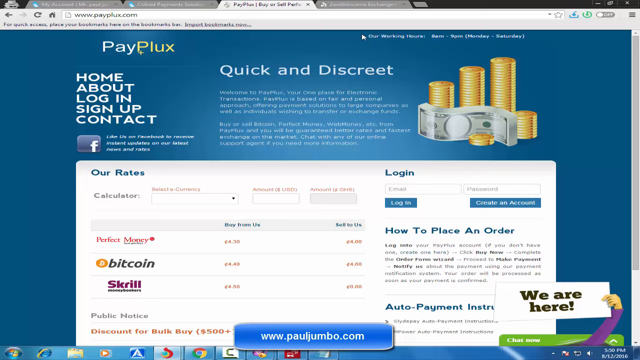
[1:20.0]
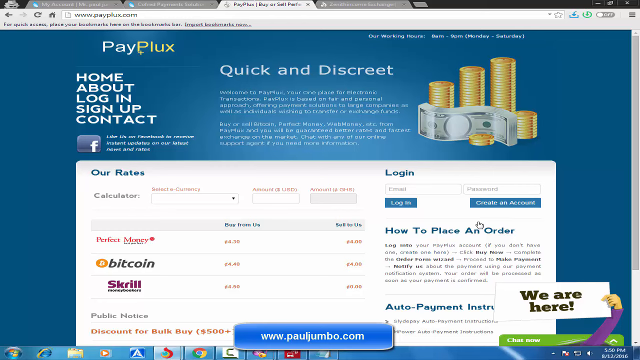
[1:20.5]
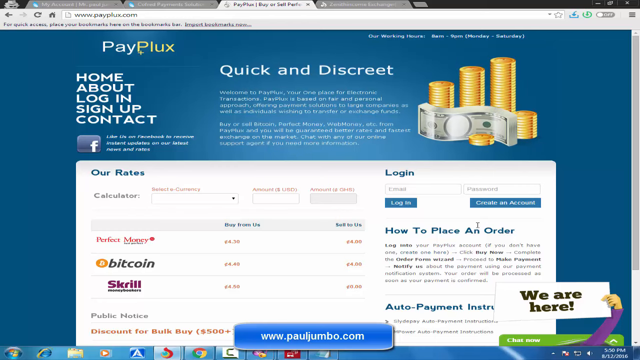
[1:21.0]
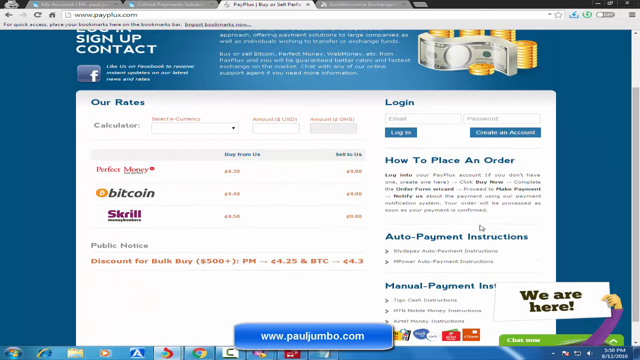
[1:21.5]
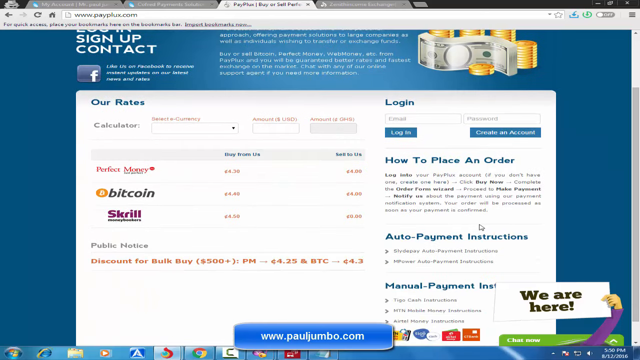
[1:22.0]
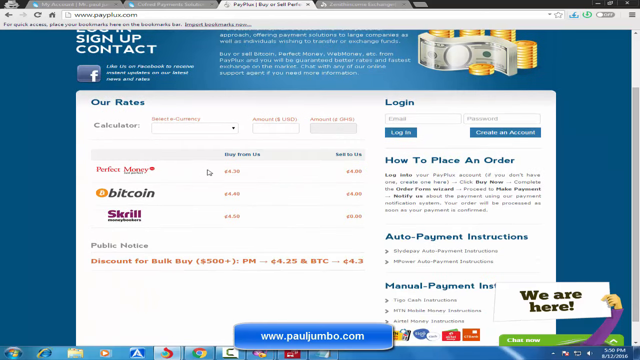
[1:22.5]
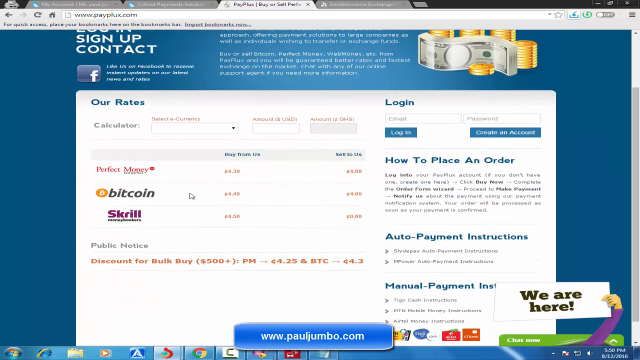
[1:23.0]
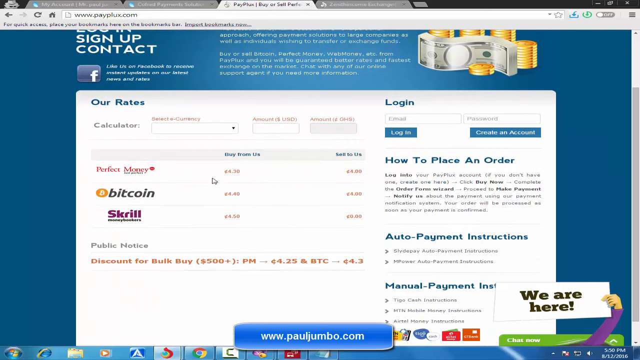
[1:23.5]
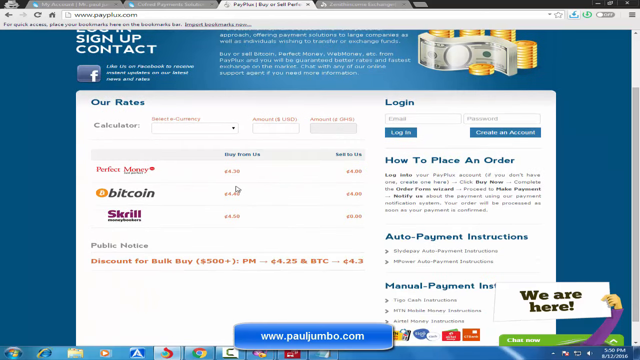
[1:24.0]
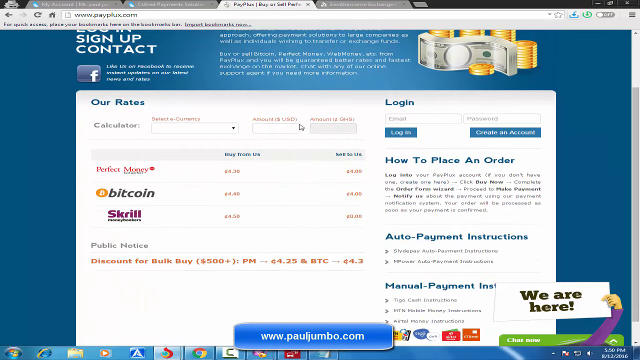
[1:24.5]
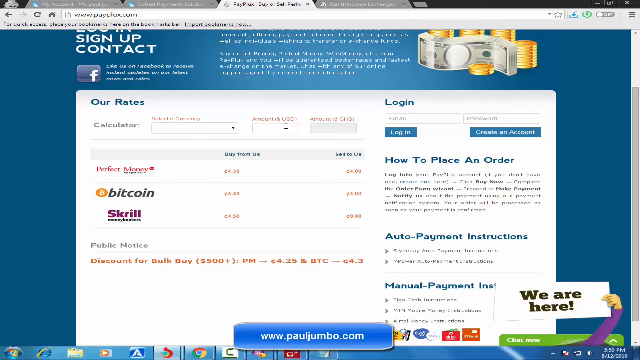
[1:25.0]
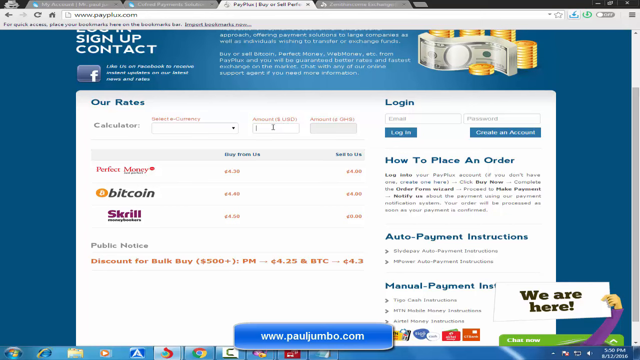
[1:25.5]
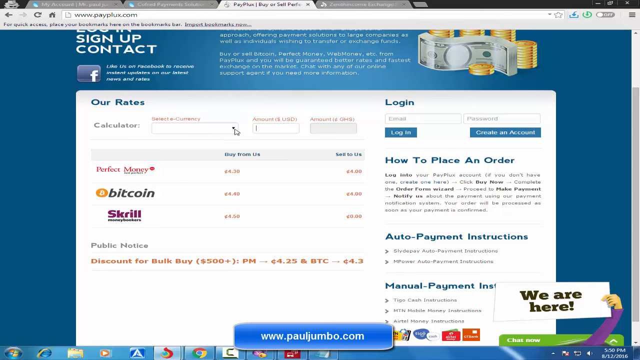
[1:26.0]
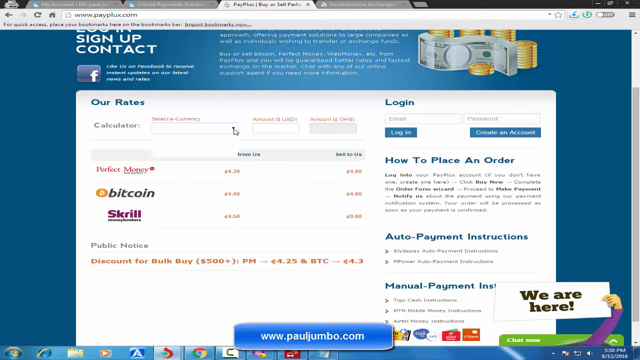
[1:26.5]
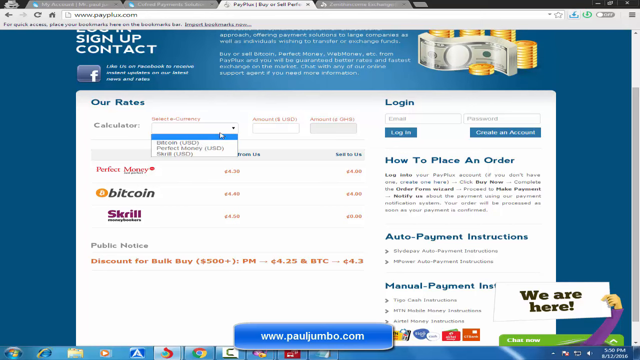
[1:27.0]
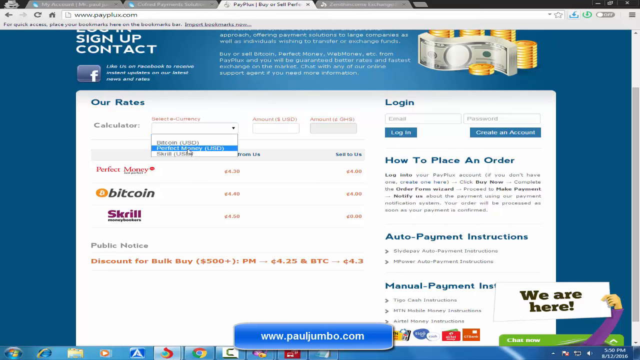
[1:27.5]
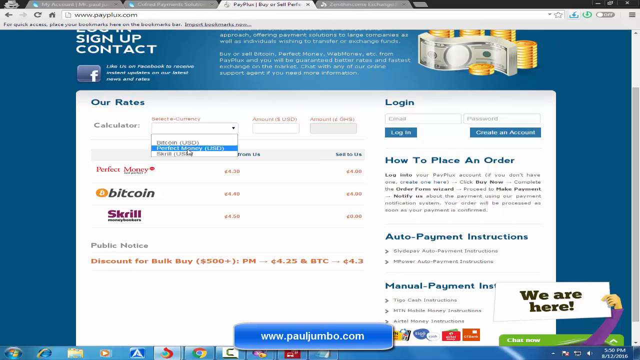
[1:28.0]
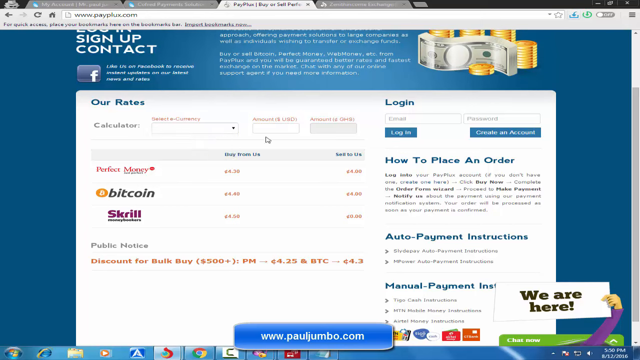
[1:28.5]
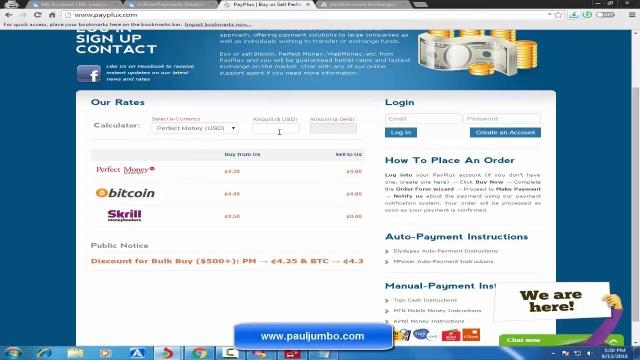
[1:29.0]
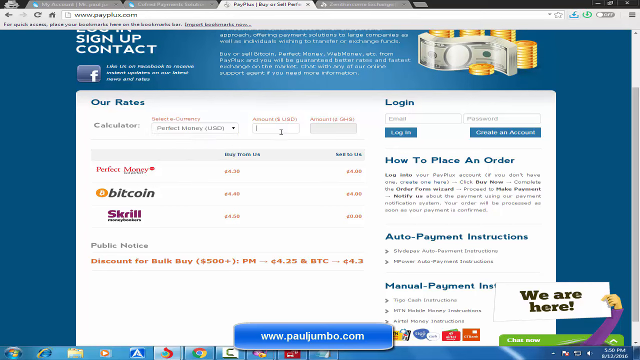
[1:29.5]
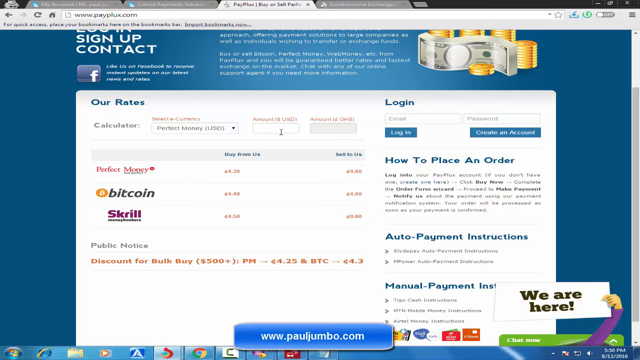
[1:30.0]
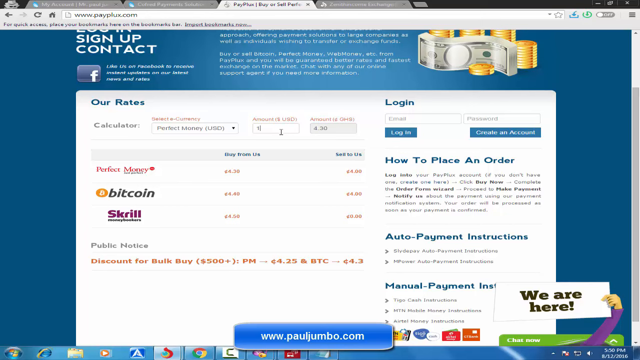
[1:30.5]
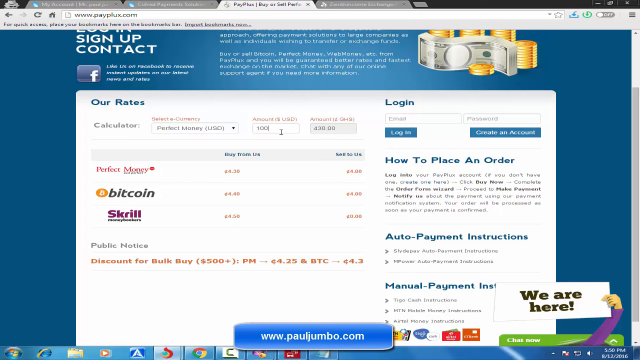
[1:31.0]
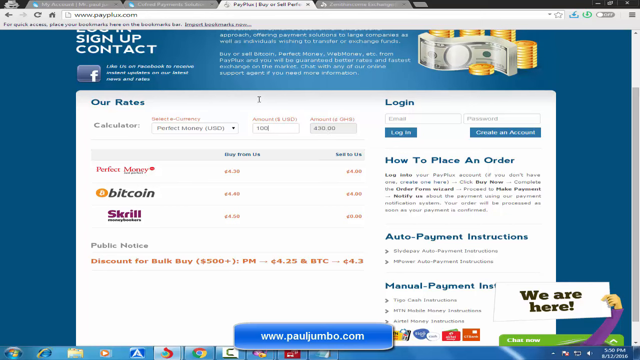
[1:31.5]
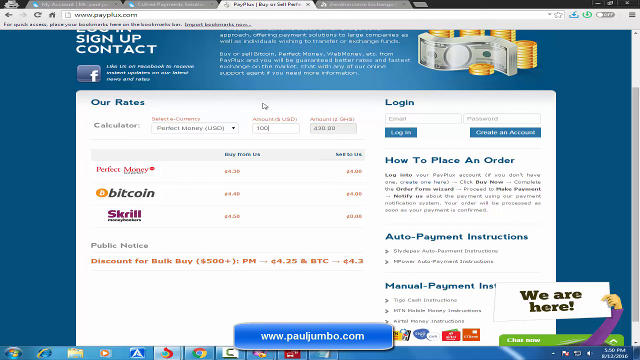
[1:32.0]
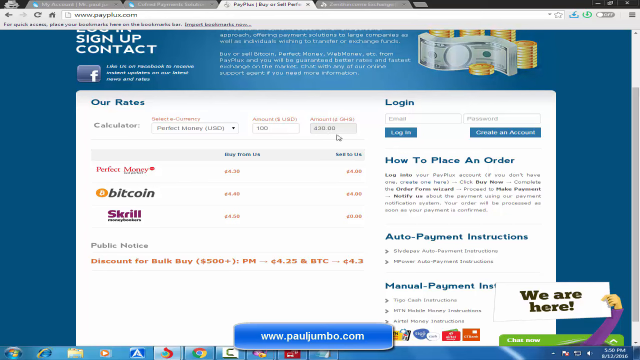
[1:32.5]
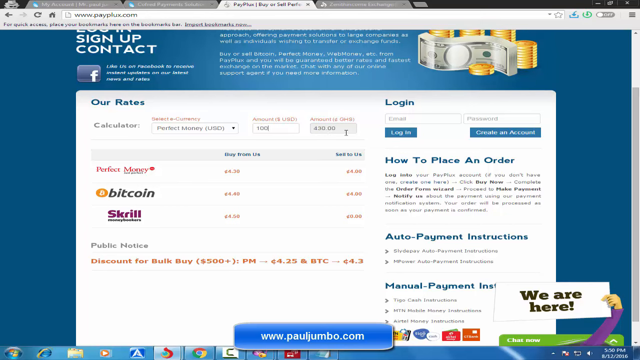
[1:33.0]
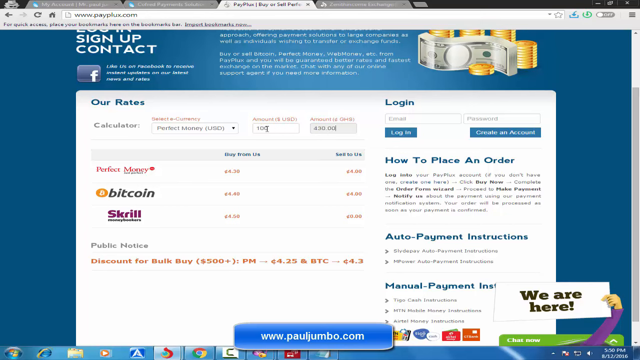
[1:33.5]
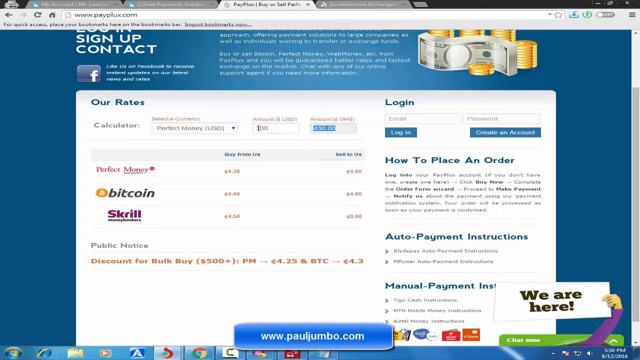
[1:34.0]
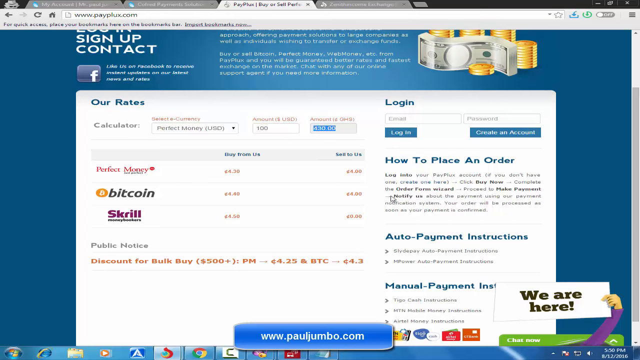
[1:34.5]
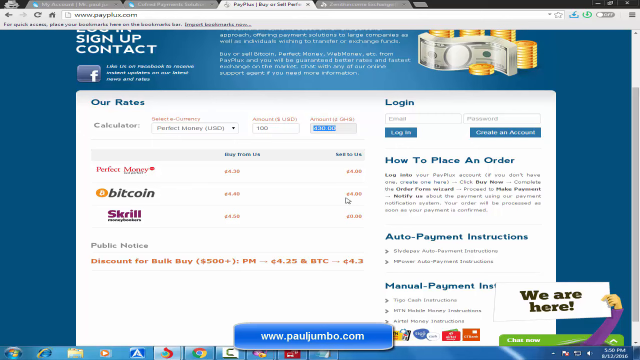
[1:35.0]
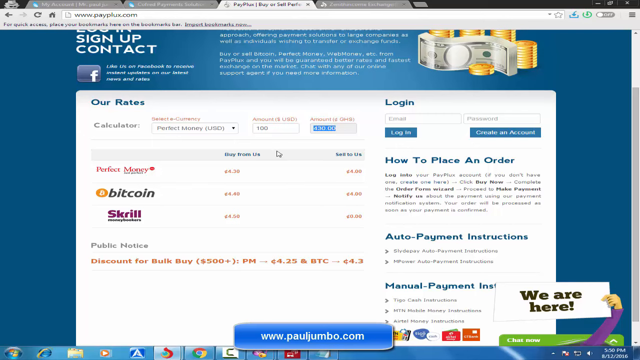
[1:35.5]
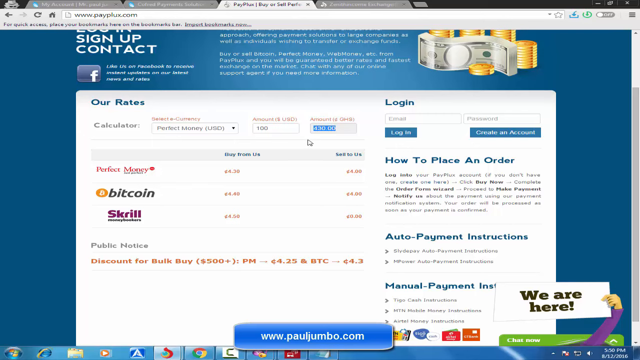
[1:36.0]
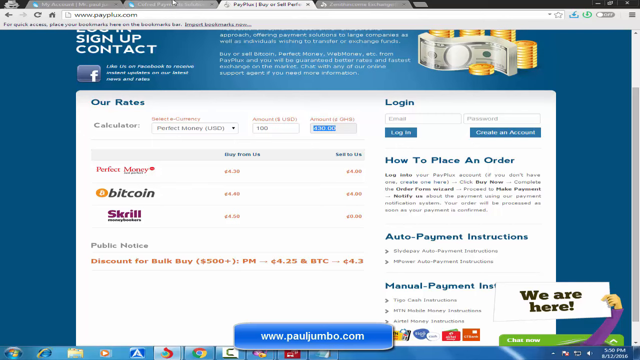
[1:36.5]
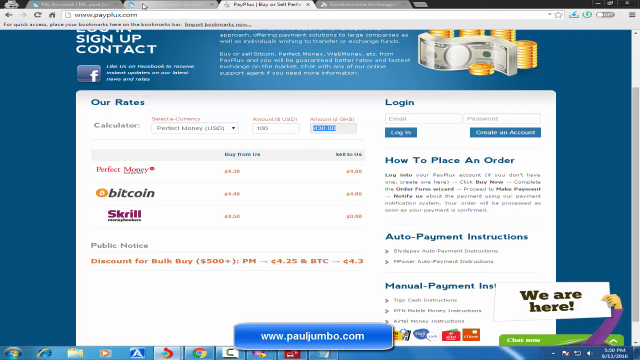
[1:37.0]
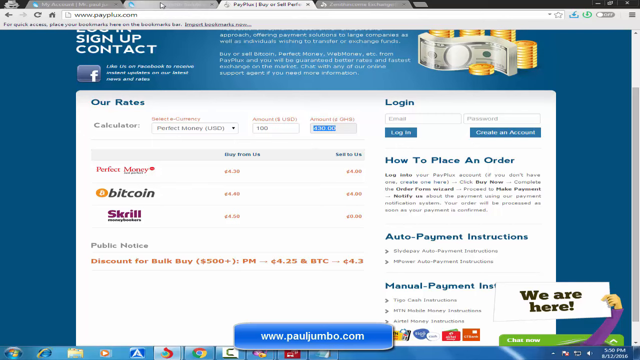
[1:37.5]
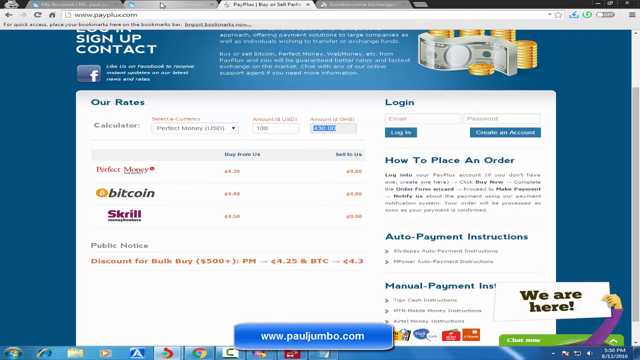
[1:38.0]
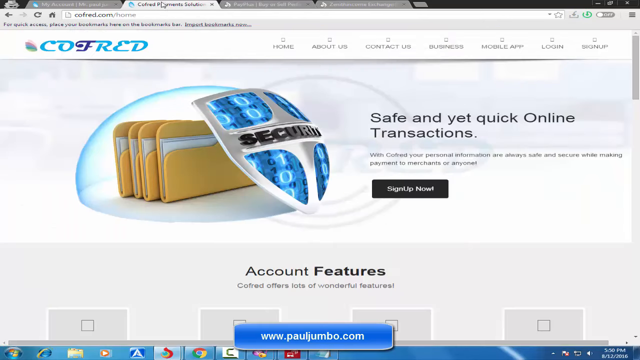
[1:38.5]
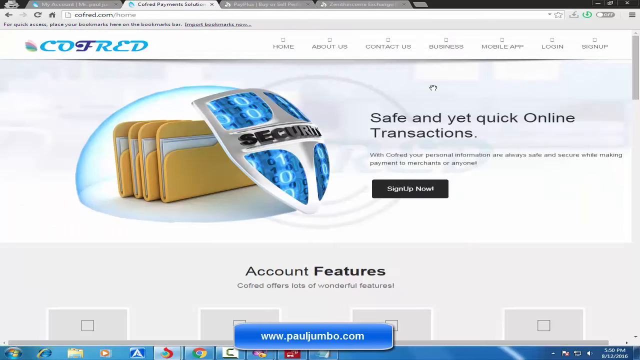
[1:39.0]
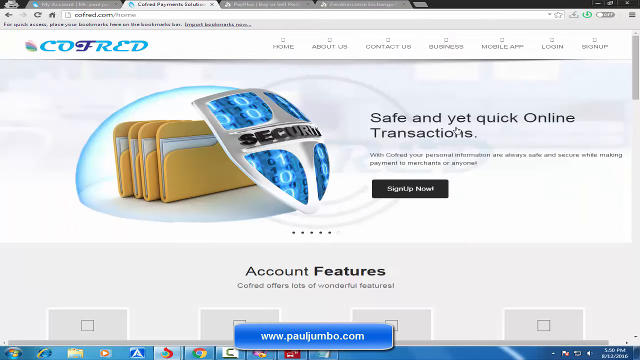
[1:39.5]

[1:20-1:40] A solid blue background with multiple readable areas appears. The cursor scrolls, showing the Bitcoin area, then goes to one of the dropdown boxes and clicks it; the boxes drop down and it clicks on one of them. The next screen, shown very quickly, has a shield on it, alongside text about home internet that looks like protection for computers. Coming back, the cursor moves around; the Bitcoin area shows how to place an order on the right, with auto payment instructions of two lines and then manual payment instructions. The single shield has security on it and four sections: two larger blue ones toward the viewer and two smaller blue ones on the right. Behind it are four files that the shield is protecting. To the right it says "safe and yet quick online transactions".